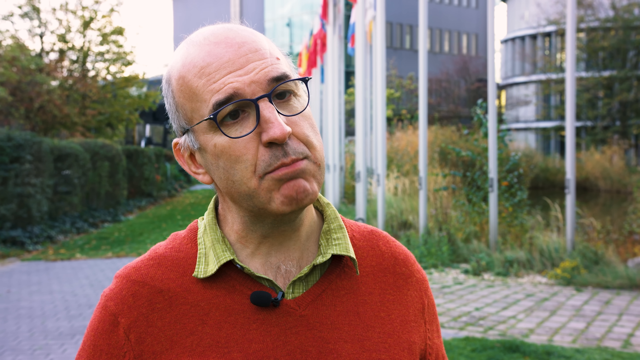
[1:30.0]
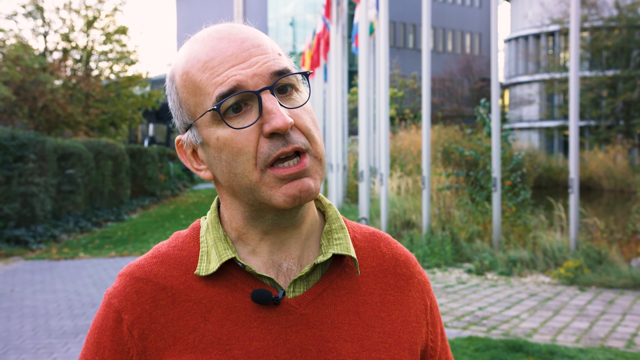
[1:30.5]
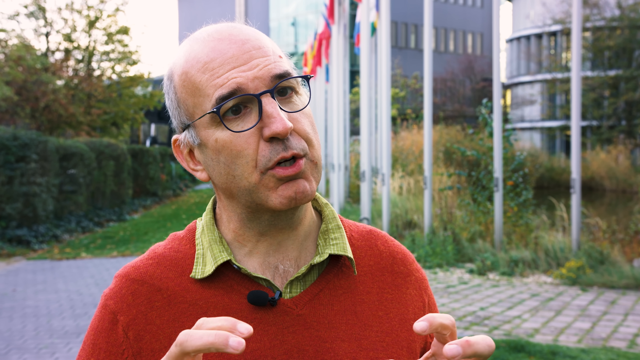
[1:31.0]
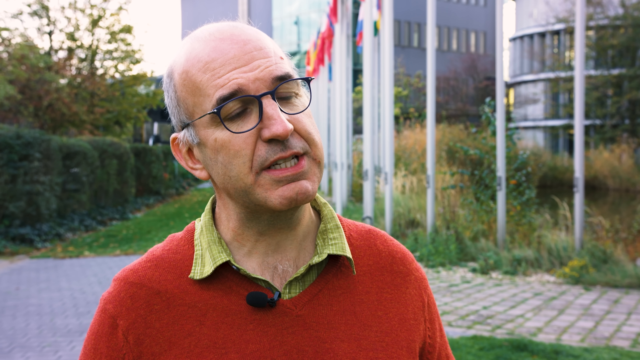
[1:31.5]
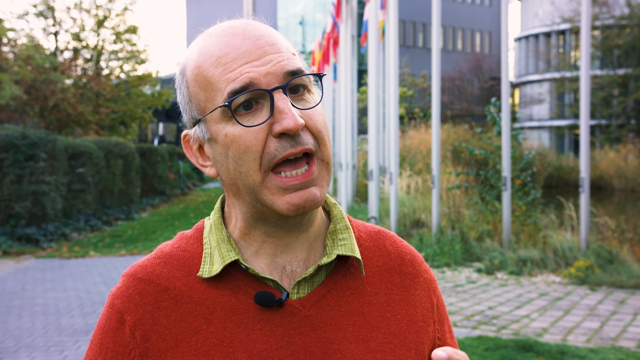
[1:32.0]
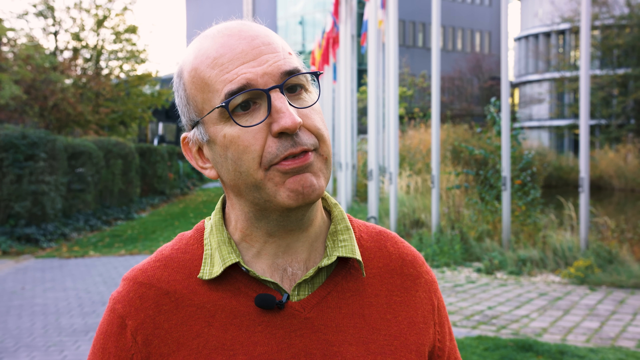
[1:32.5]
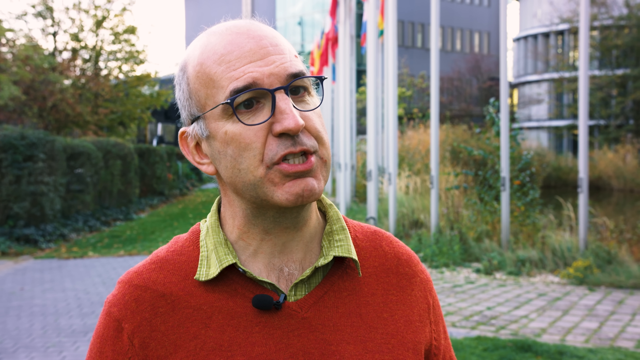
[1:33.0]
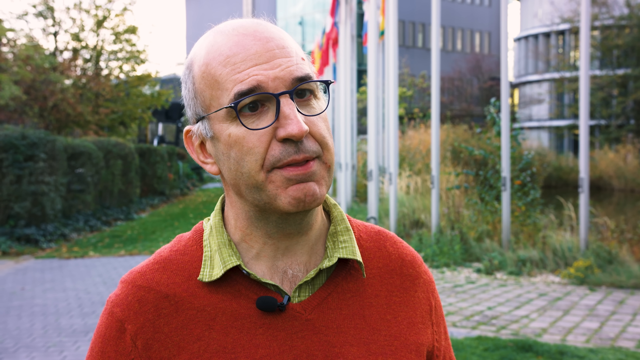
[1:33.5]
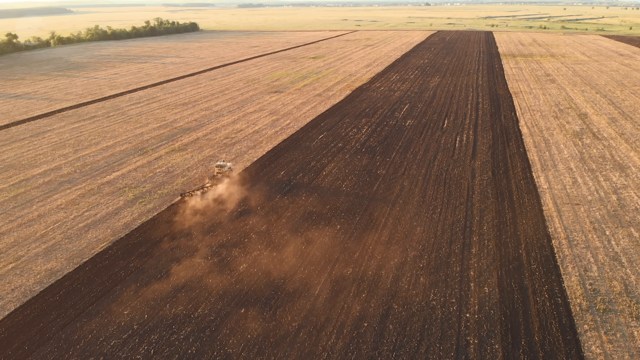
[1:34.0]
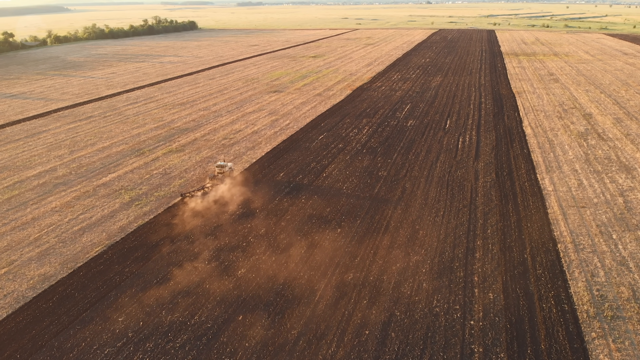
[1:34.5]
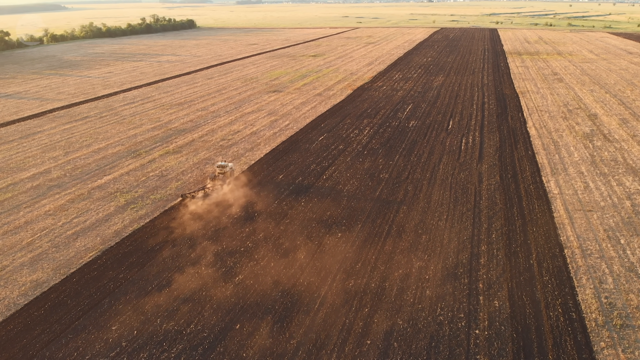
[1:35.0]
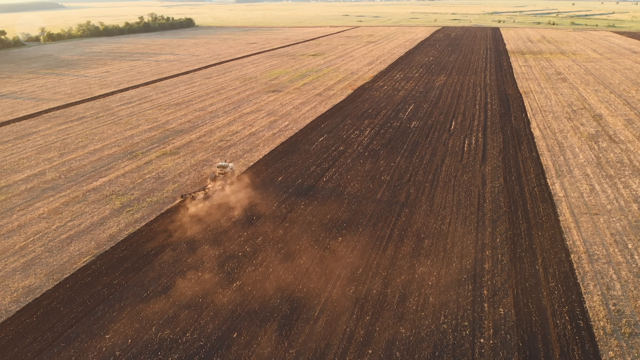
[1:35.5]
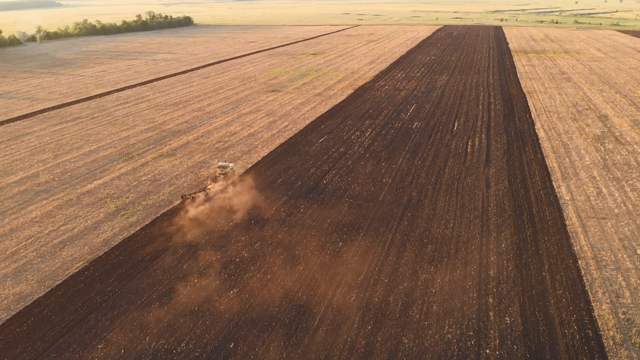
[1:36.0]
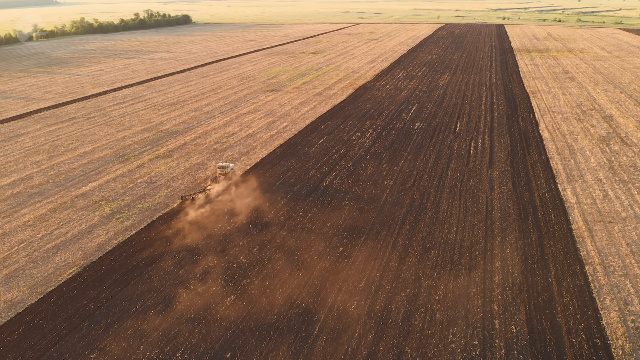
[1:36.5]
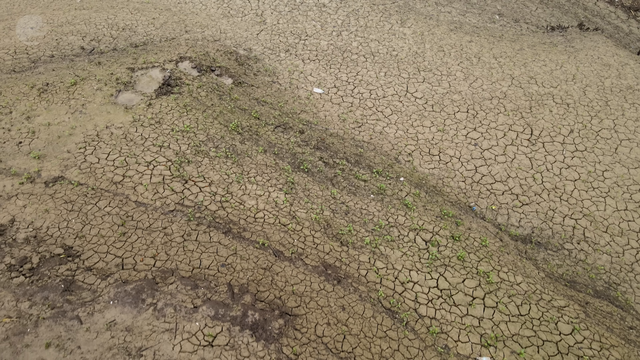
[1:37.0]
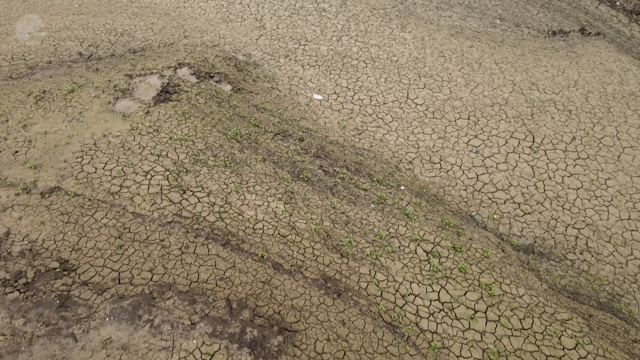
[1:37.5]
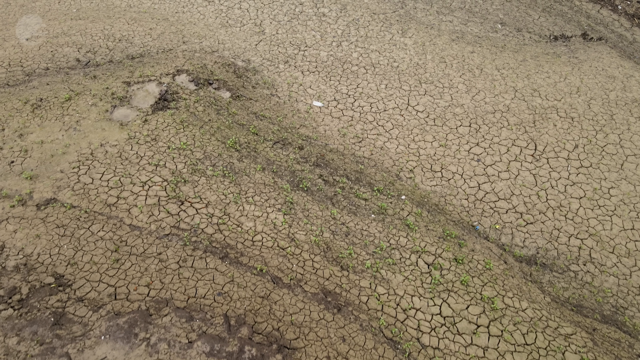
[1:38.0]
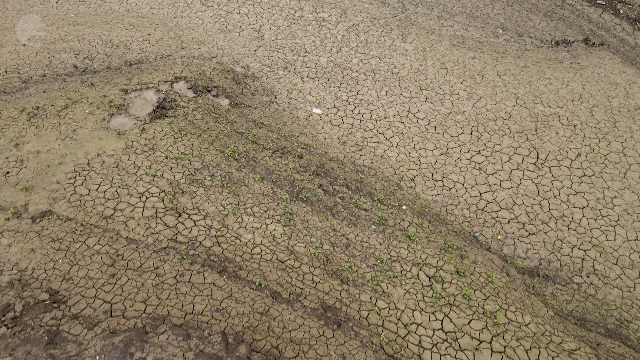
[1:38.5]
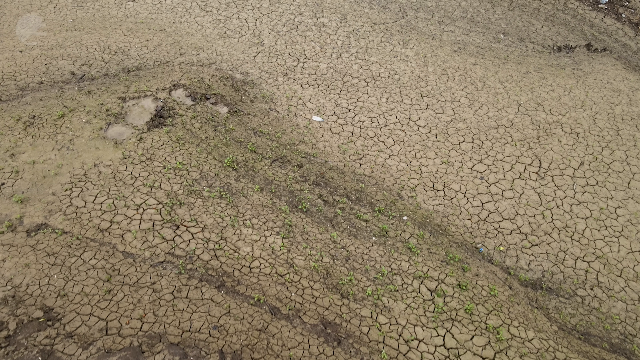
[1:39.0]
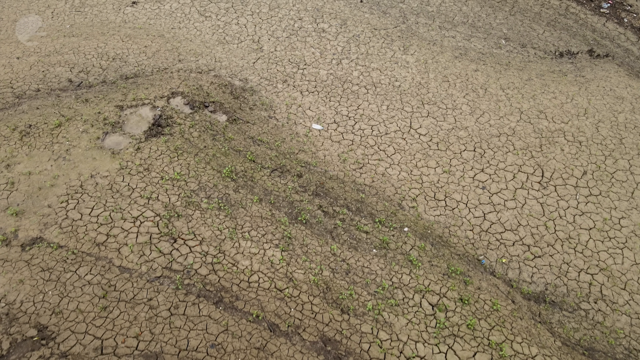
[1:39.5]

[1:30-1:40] A man talks to the camera, and then footage shows an agricultural machine going down a row in what looks like a field of grass, hay or grain, with dark brown soil in the center and a golden-colored crop, presumably, on either side. The view changes to what looks like an aerial view of very dry land, soil or dirt that is completely cracked, whitish brown with lines all through it. The man then appears talking to the camera again. The footage possibly relates to the agricultural impacts of climate change or drought.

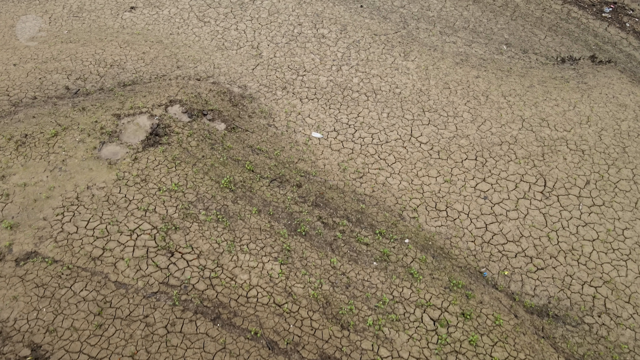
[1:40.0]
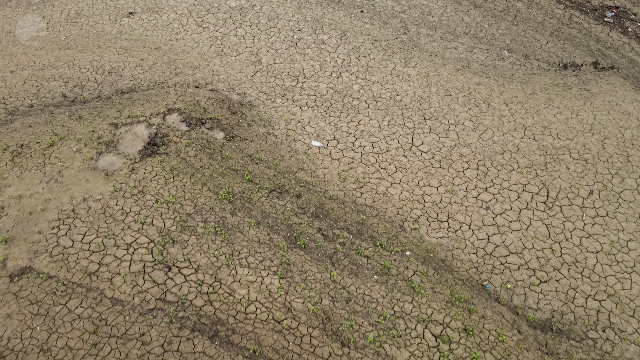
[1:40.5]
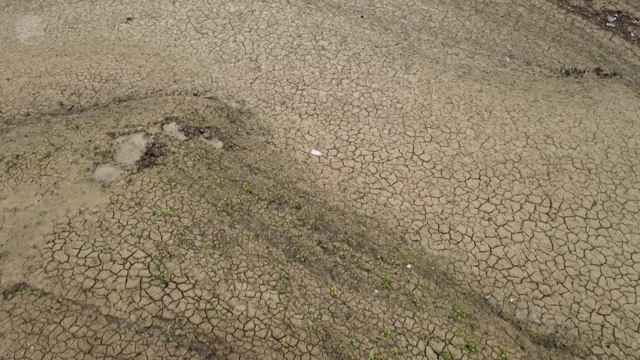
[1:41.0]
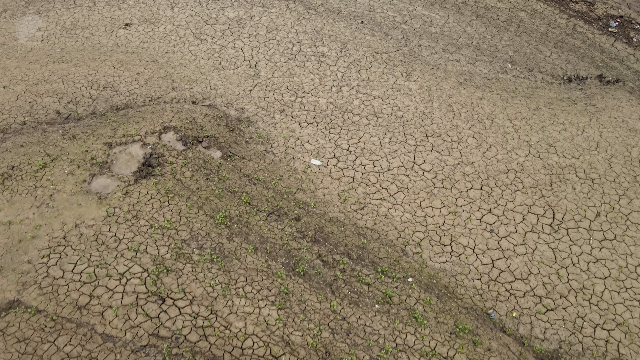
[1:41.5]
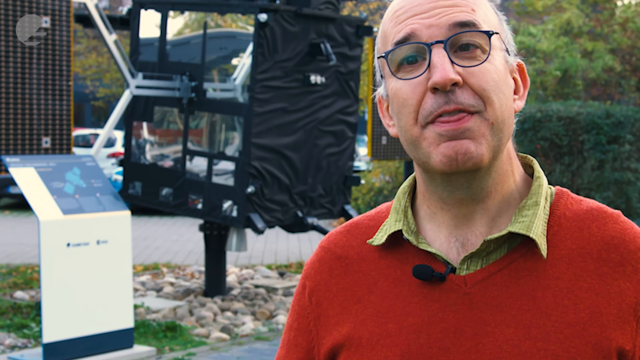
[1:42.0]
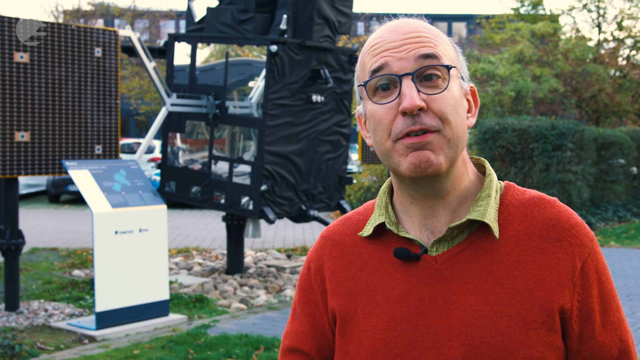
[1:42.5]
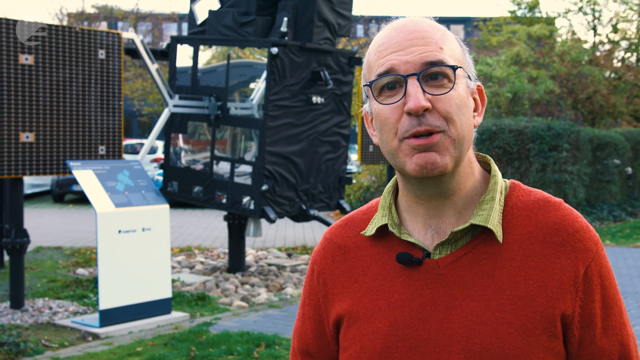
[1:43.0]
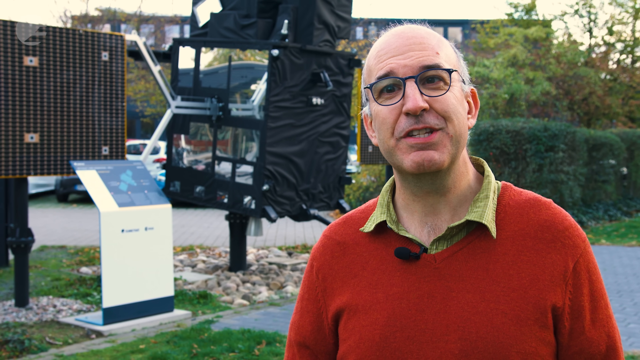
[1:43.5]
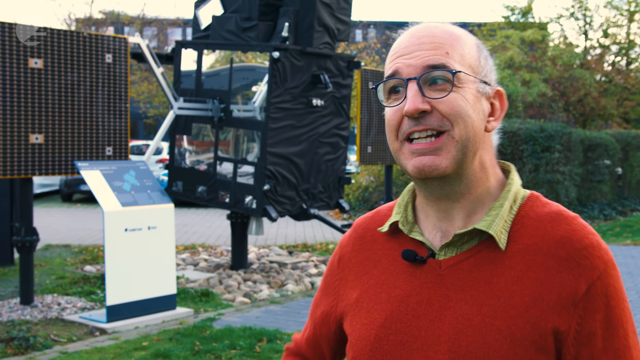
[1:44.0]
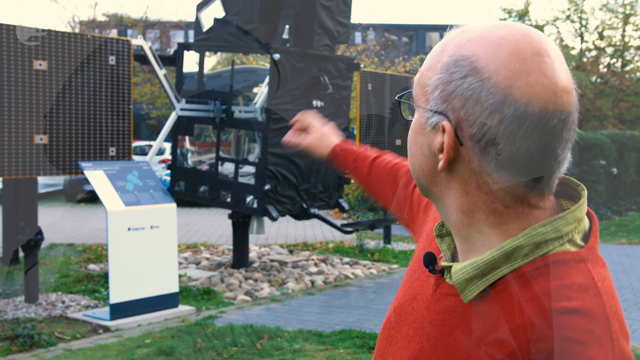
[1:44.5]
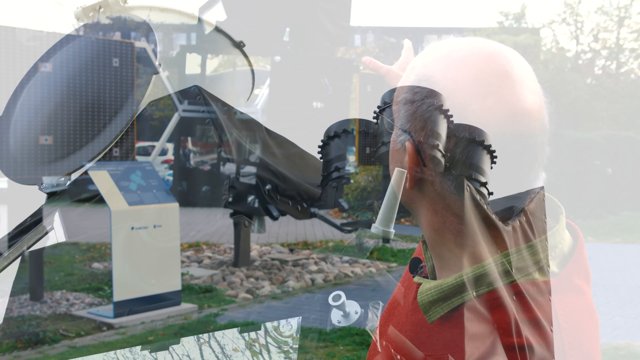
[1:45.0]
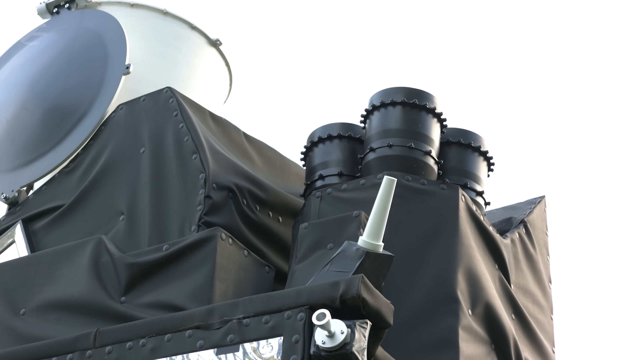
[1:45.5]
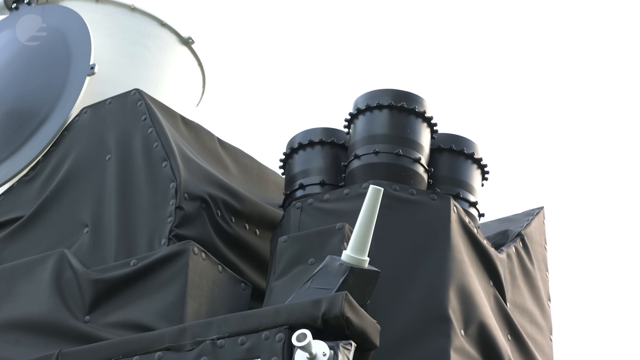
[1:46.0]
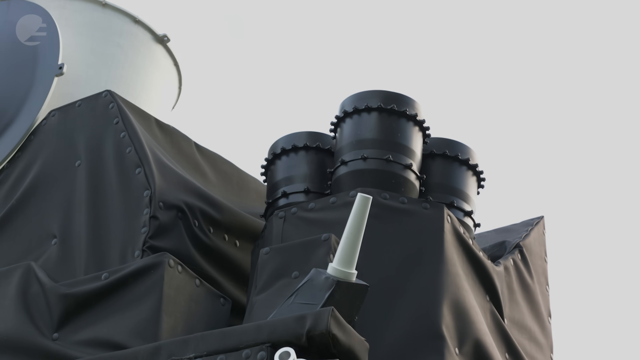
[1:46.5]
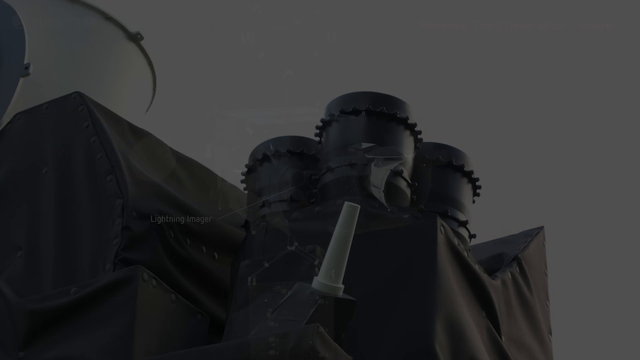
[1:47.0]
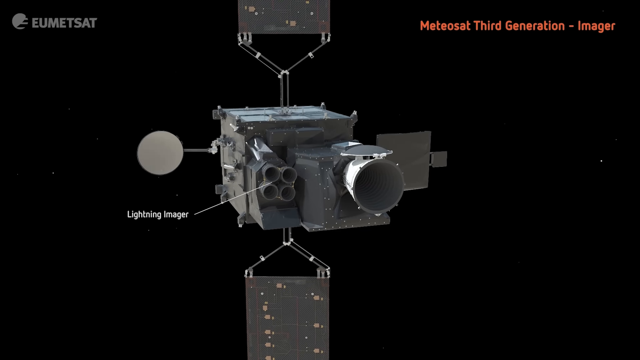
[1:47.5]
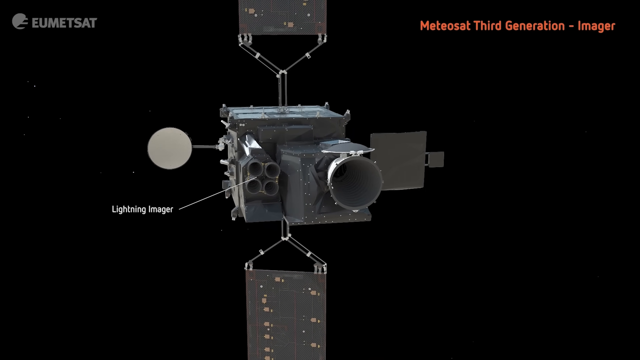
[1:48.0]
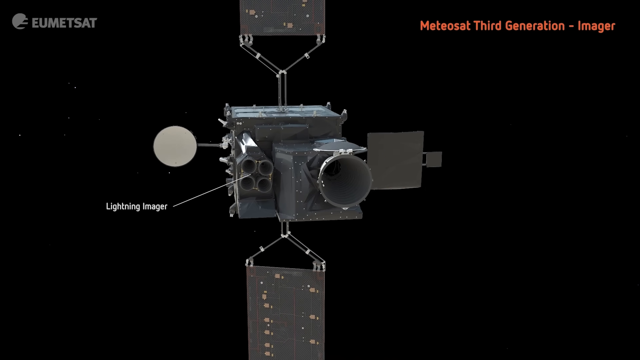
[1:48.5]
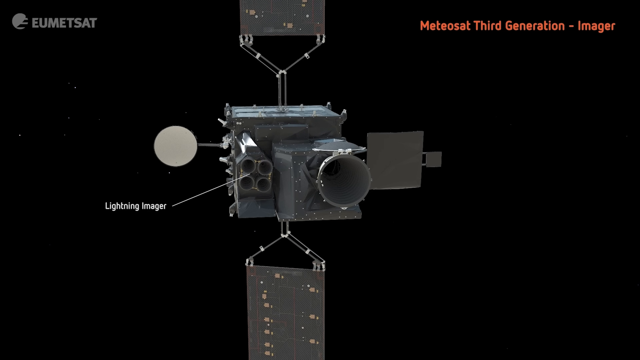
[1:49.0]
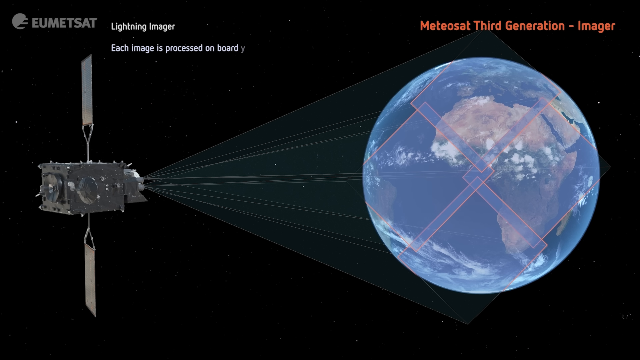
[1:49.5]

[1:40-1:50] An aerial view shows very dry land, what looks like dirt or mud dried to the point of cracking, in a very light brownish gray, as the view sort of zooms out. The view changes to a man in a green collared shirt and a red V-neck sweater talking to the camera and pointing at a device that appears to be a satellite. Computer-rendered drawings, presumably of this satellite, follow: it looks like a sort of black rectangular prism with wing-like solar panels coming off the top and bottom, and one side of the cube-like object has a protrusion, possibly cylindrical, that is probably doing the imaging. It points toward the Earth with some lines, and words come up describing the type of imaging it does.